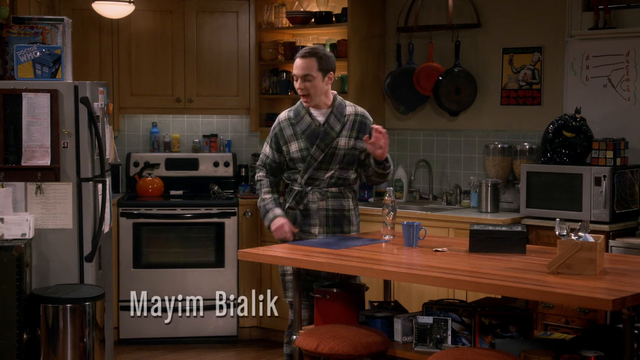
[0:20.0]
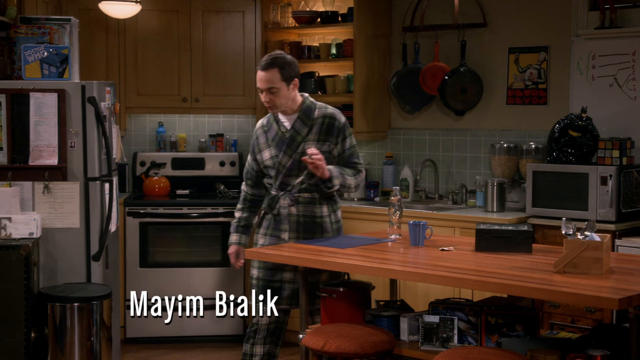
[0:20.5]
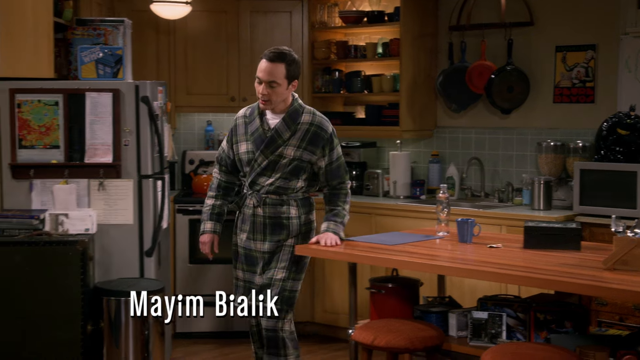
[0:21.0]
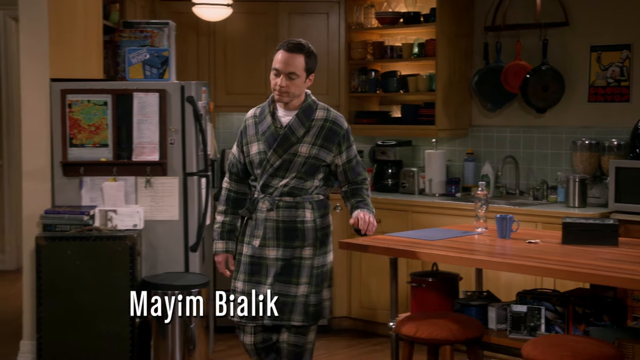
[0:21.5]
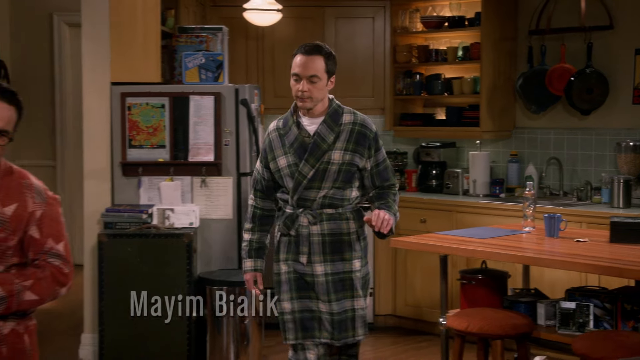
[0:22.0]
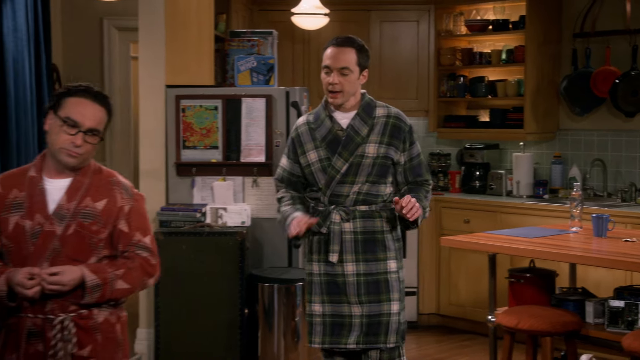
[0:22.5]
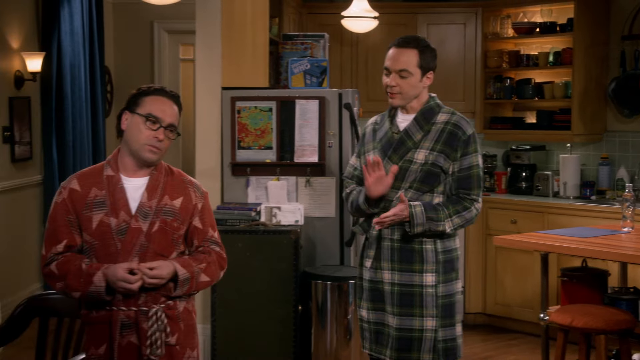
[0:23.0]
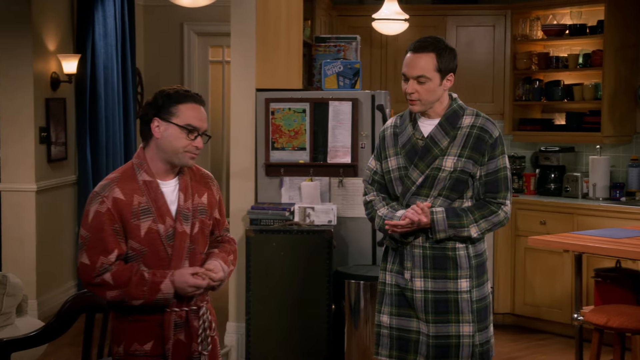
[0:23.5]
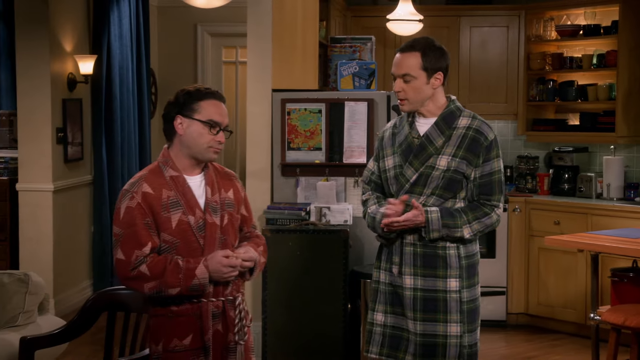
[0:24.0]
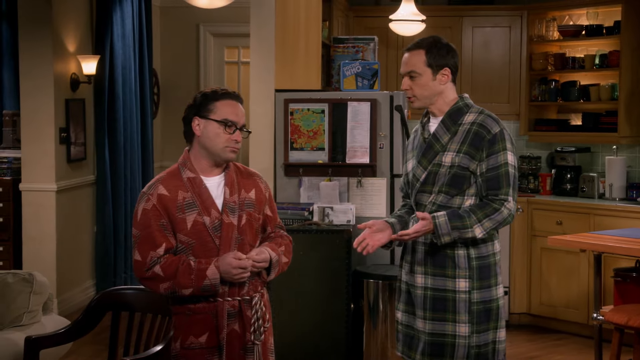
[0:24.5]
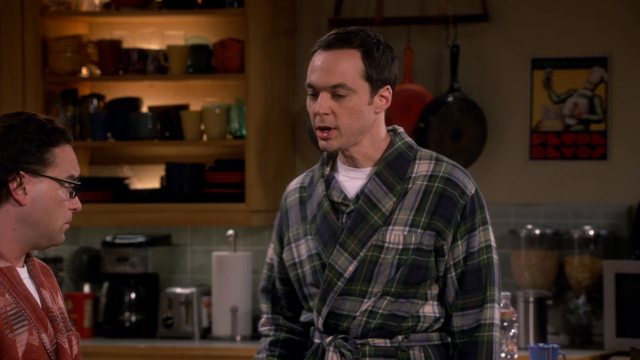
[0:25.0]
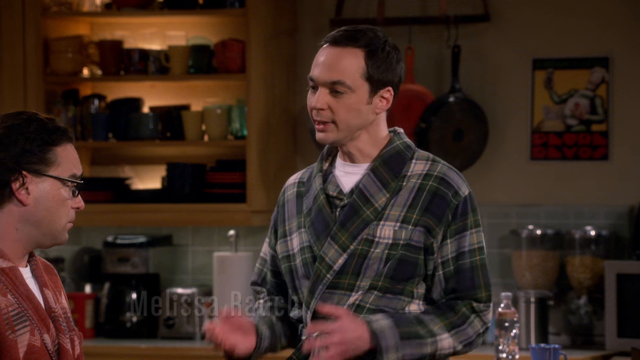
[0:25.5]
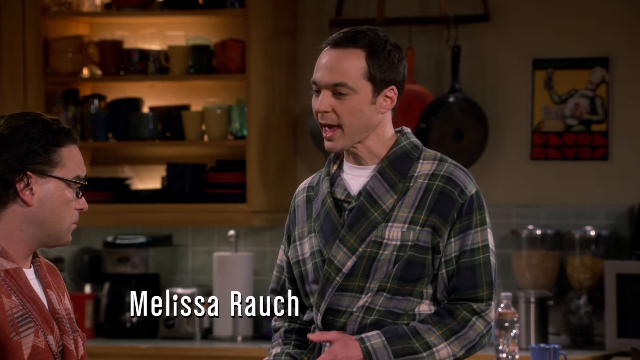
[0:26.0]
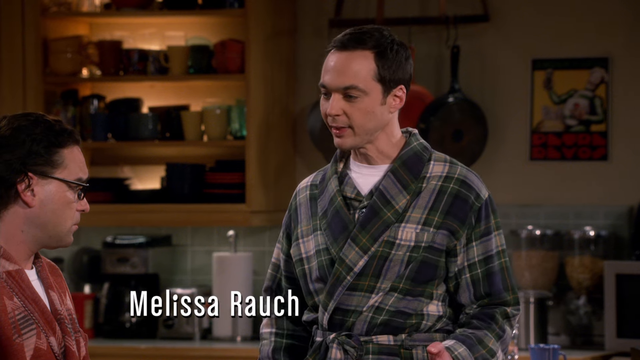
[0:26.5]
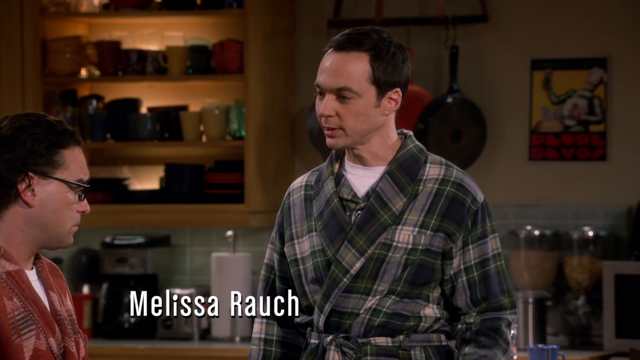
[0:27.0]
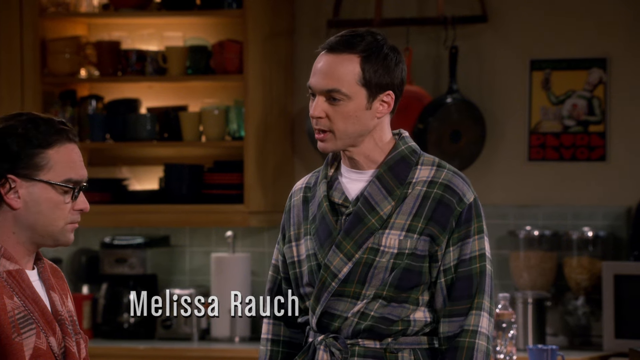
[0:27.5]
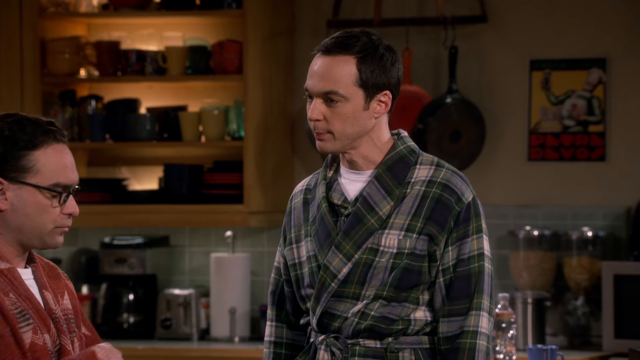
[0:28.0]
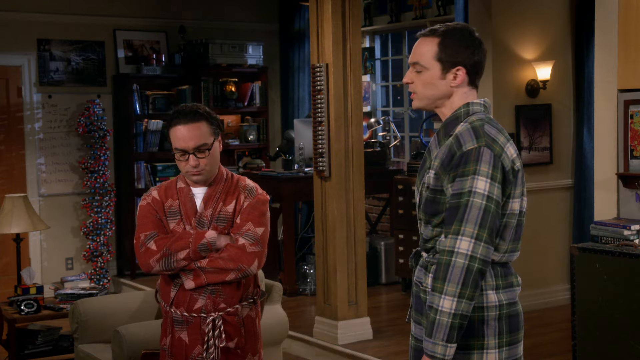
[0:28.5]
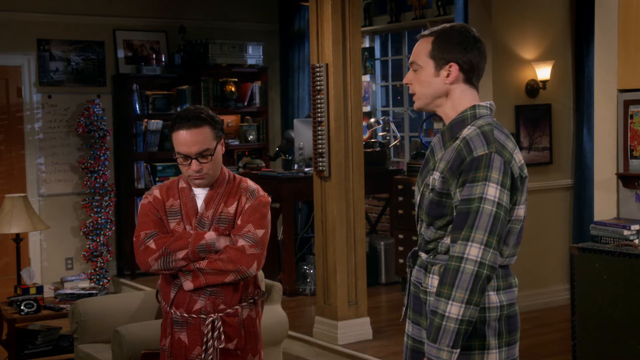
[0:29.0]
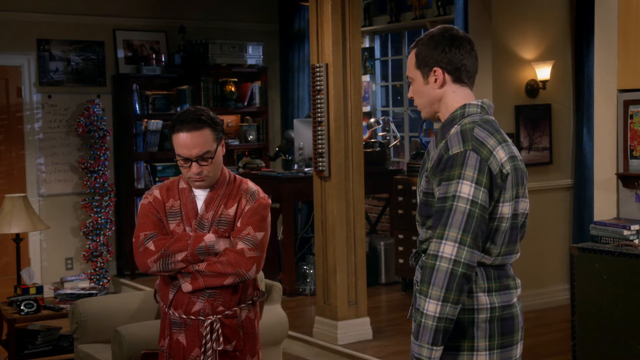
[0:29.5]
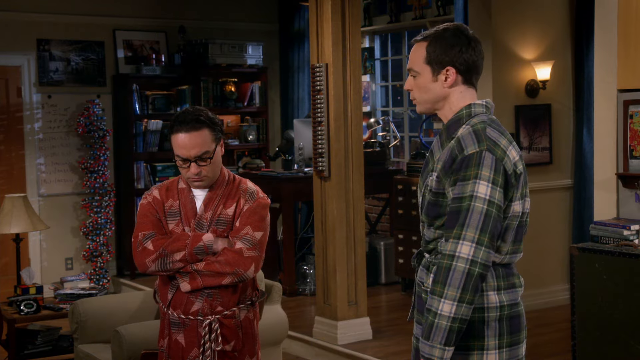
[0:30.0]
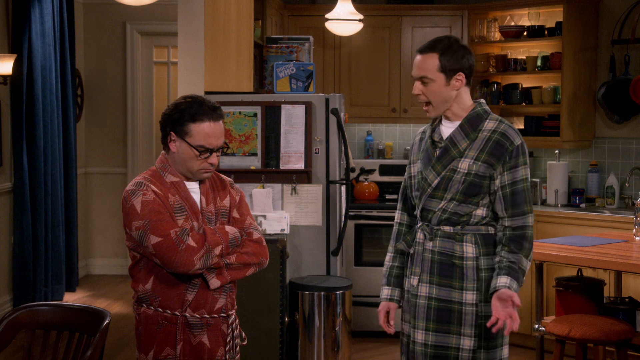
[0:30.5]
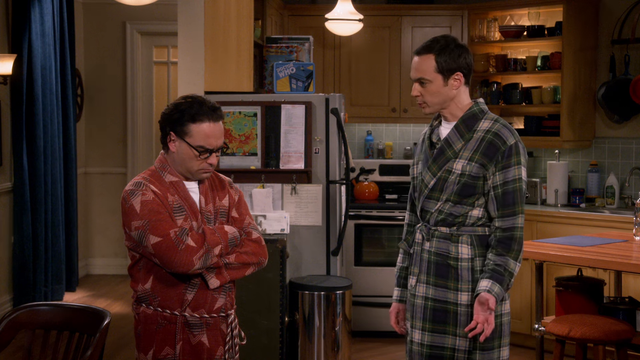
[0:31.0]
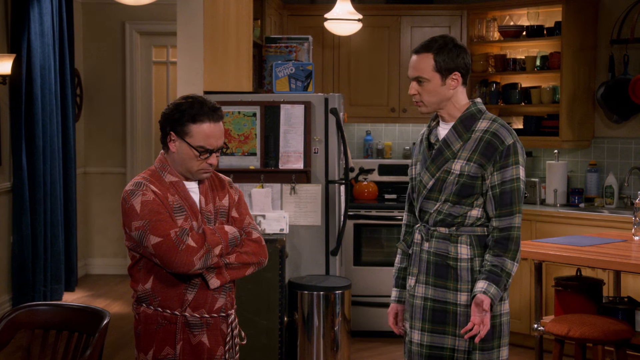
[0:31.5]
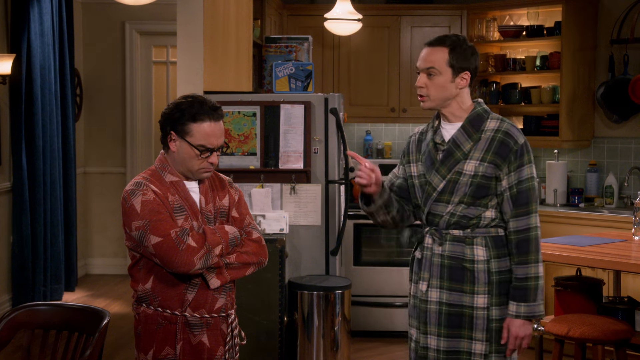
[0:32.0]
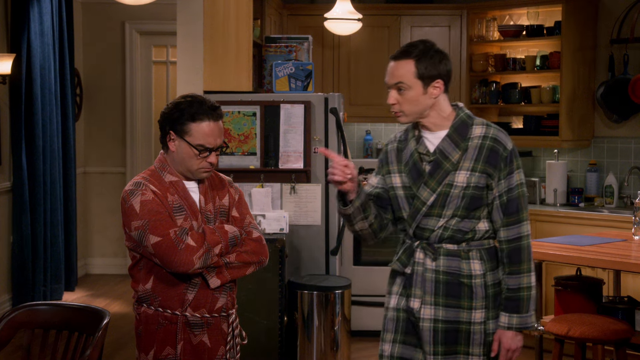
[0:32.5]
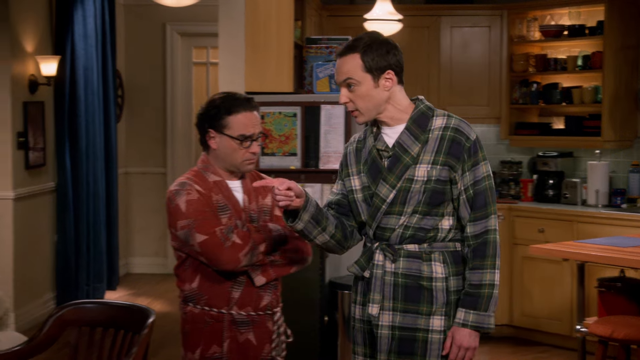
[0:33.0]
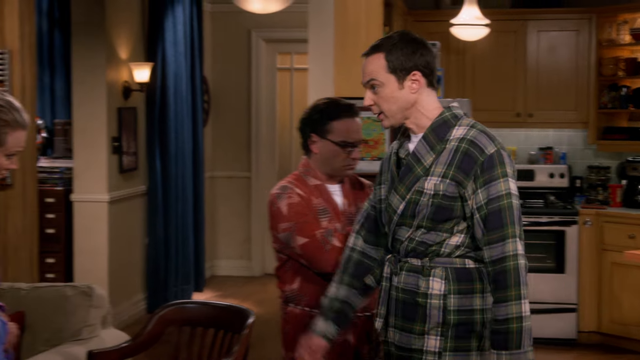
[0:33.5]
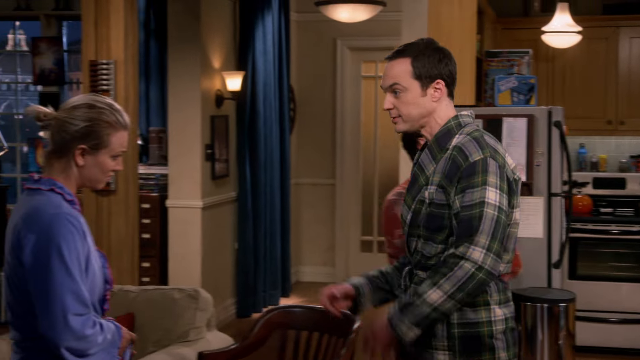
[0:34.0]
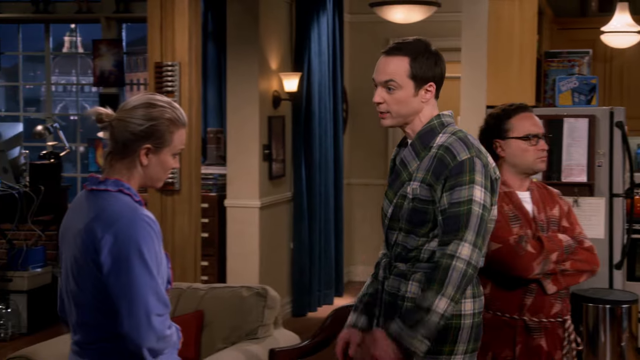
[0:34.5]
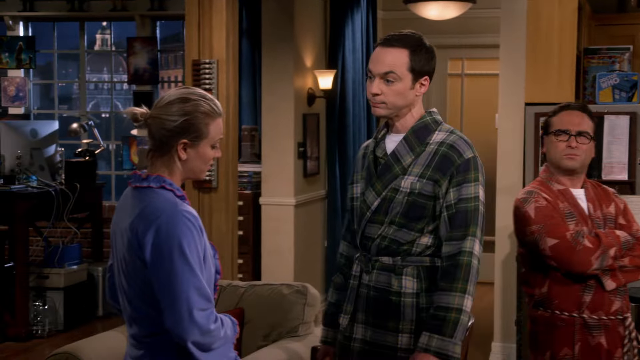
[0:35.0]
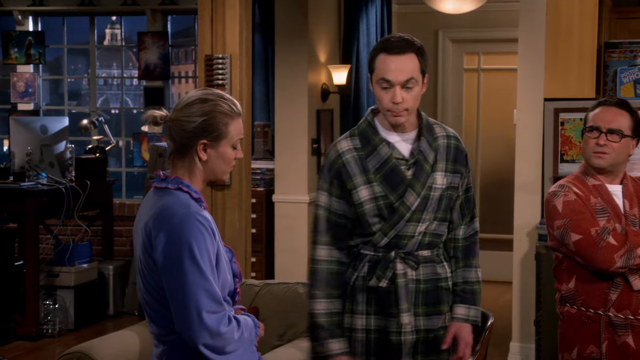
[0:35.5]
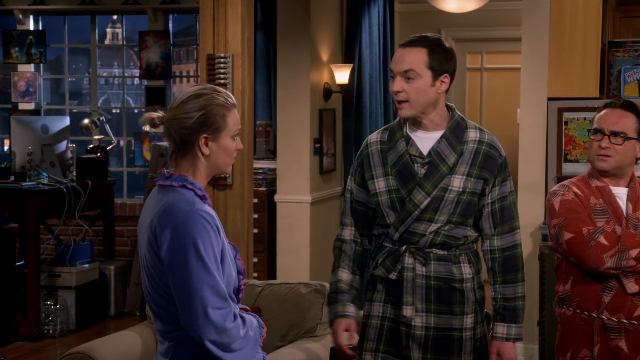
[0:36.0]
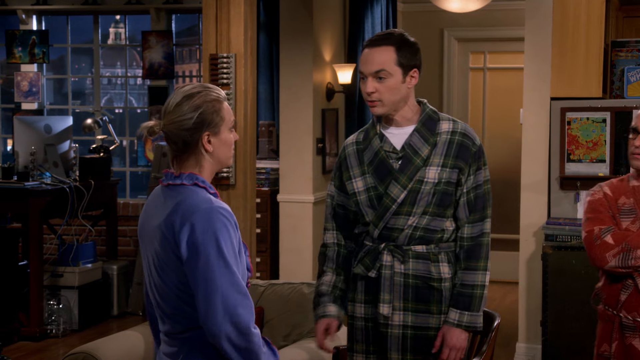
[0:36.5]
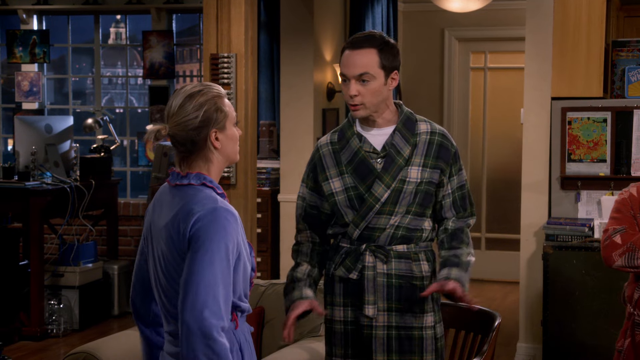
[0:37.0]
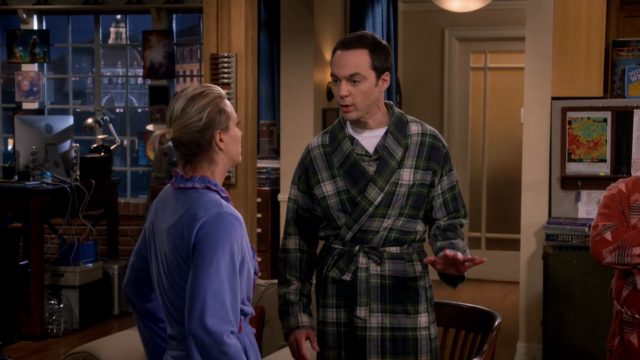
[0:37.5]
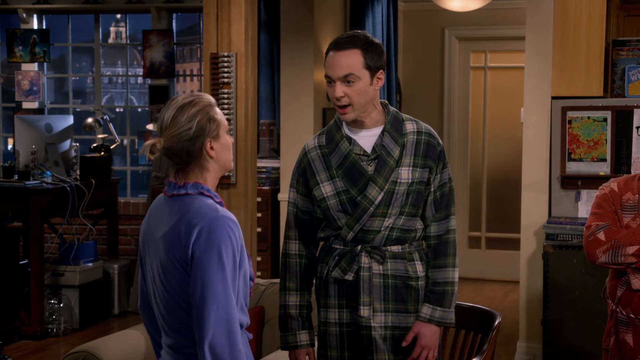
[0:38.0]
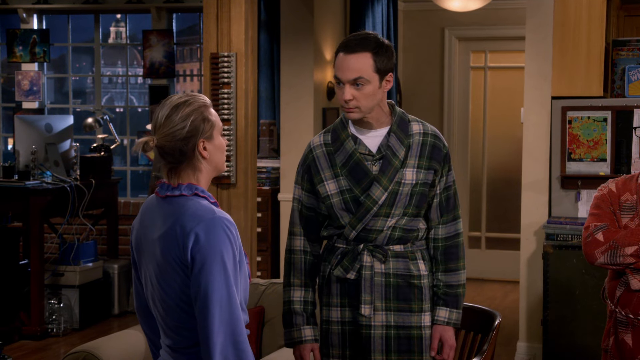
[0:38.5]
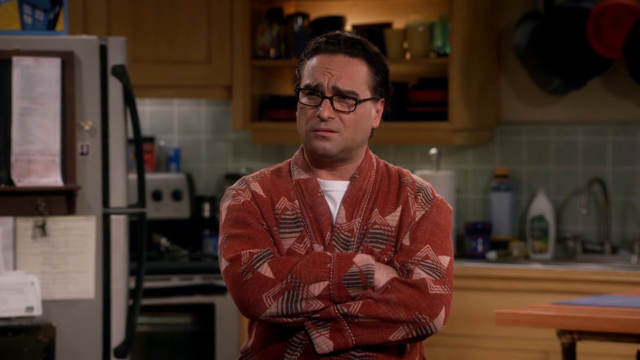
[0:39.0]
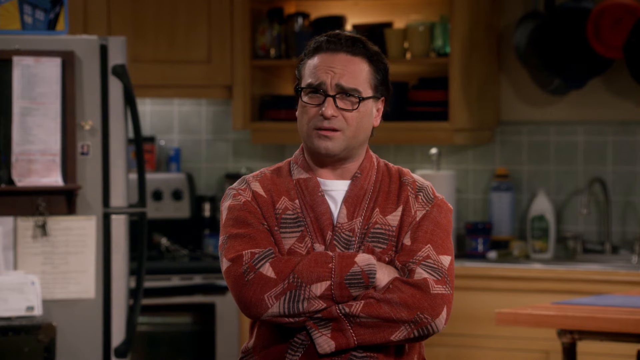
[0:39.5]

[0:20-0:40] The focus is on the man standing in his bathrobe, who has moved over toward the kitchen counter. He talks to the other people in the room, looks over toward them and begins walking toward them. As he walks, he places the palm of his left hand on the countertop and continues toward the other man in a robe. He claps his hands together and holds them in that position for a moment as he keeps speaking to the man. The other man is shorter and looks back at him with a coy expression, as if he may be being reprimanded. The shot then returns to the man in the plaid robe, zoomed in as he speaks to the other man; they face each other and he has a snarky look on his face. He then moves over and points the forefinger of his right hand up at the woman standing in the room.